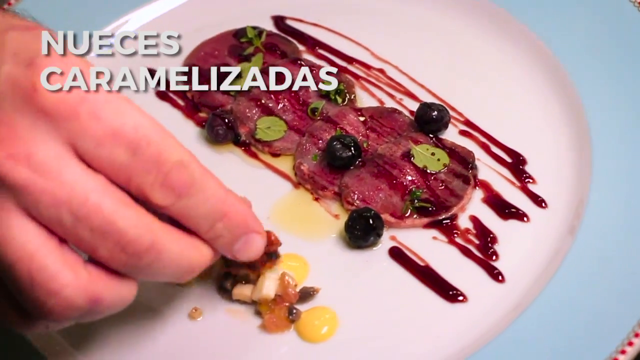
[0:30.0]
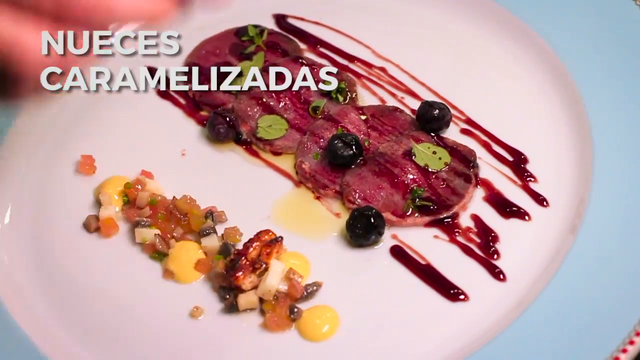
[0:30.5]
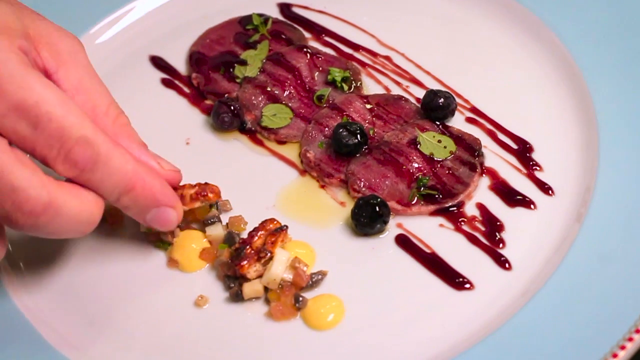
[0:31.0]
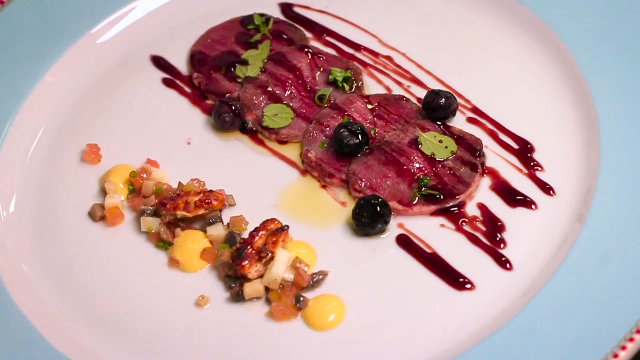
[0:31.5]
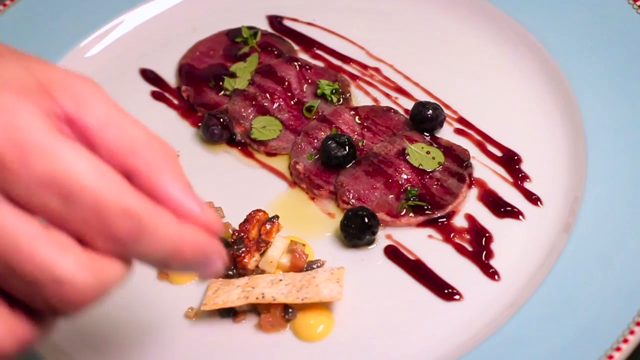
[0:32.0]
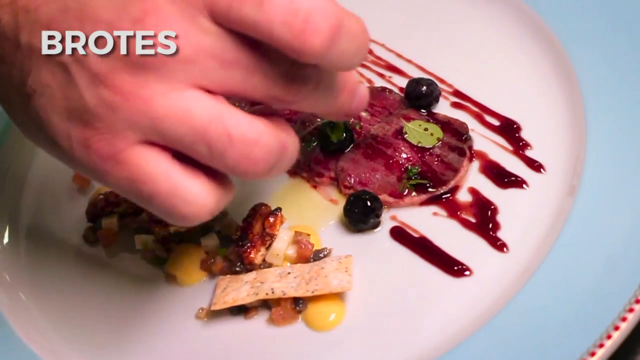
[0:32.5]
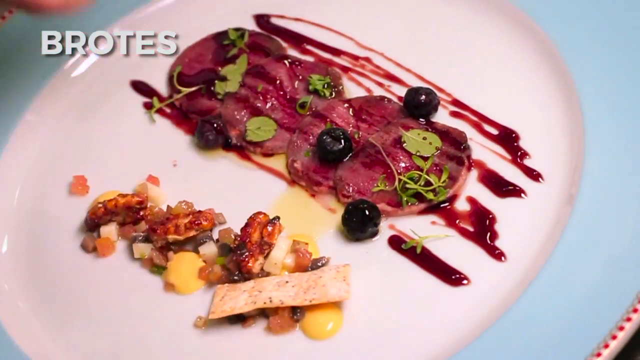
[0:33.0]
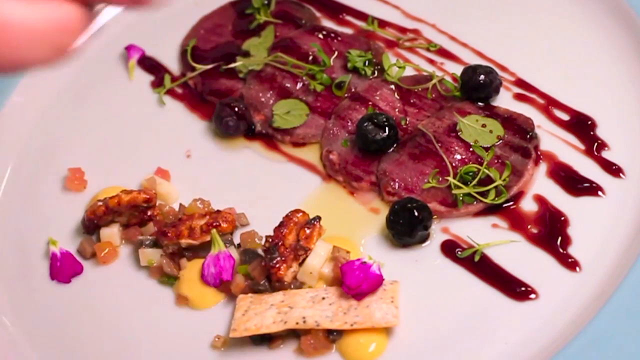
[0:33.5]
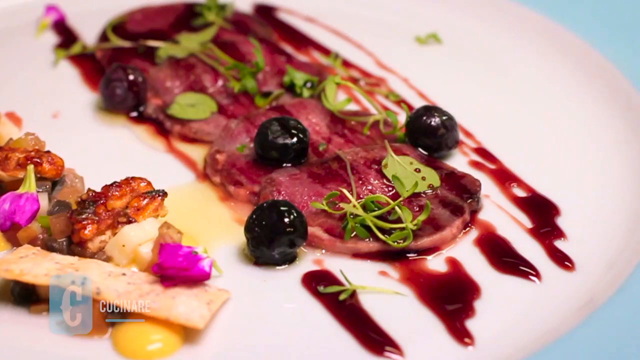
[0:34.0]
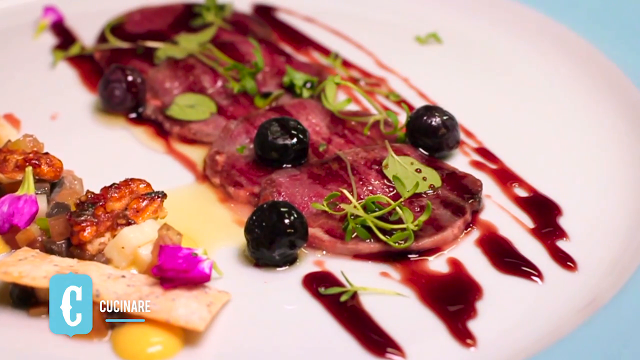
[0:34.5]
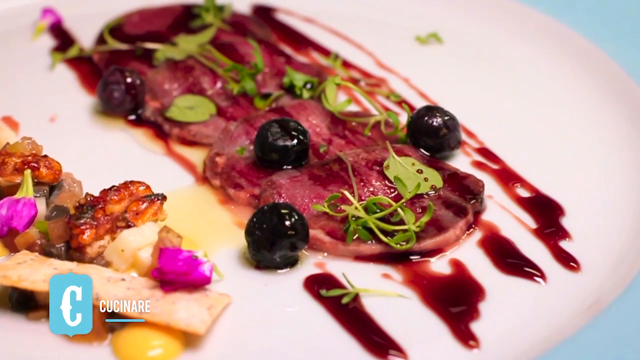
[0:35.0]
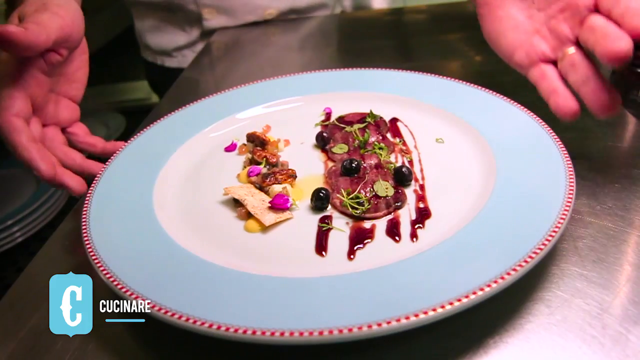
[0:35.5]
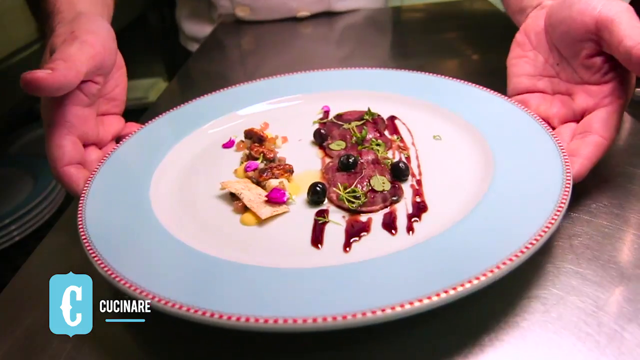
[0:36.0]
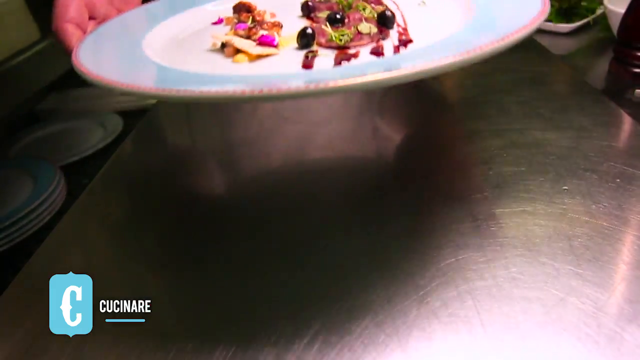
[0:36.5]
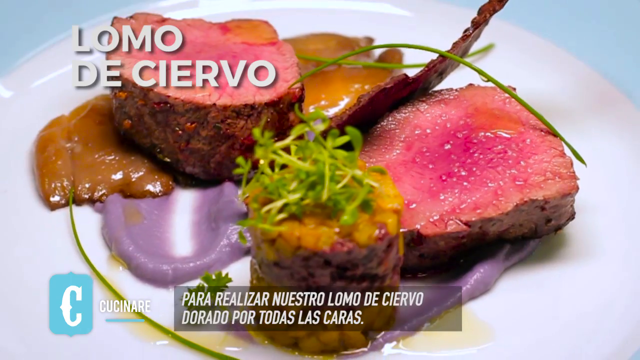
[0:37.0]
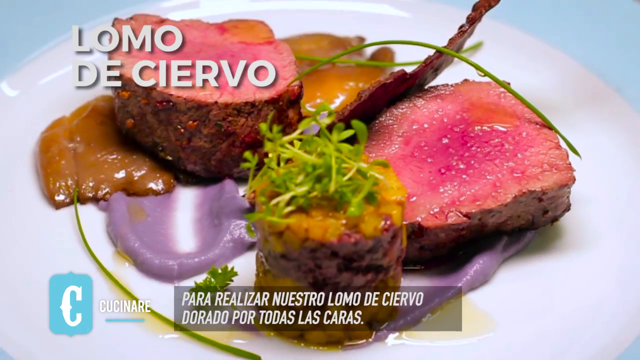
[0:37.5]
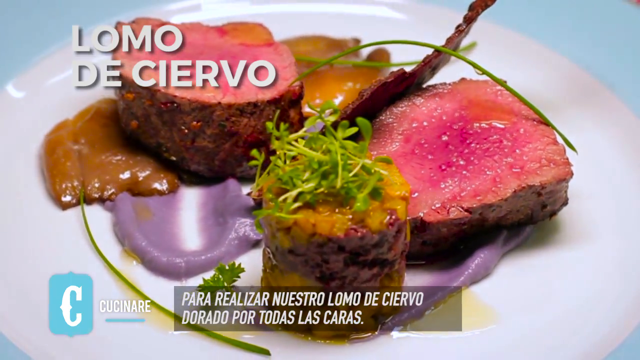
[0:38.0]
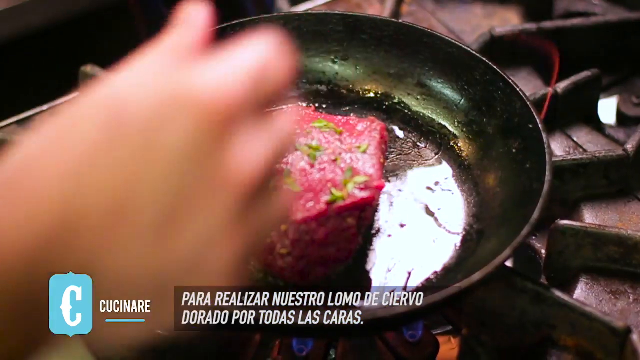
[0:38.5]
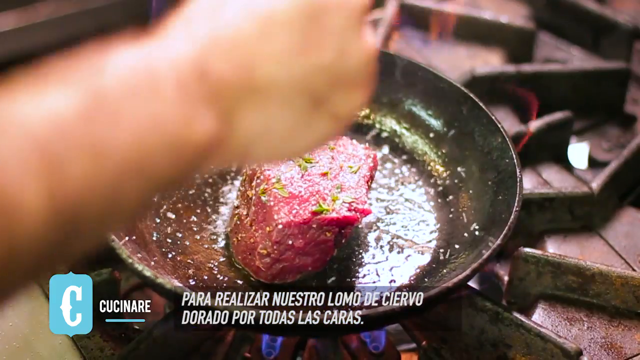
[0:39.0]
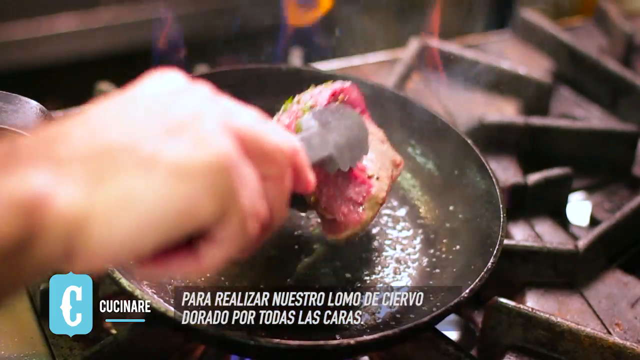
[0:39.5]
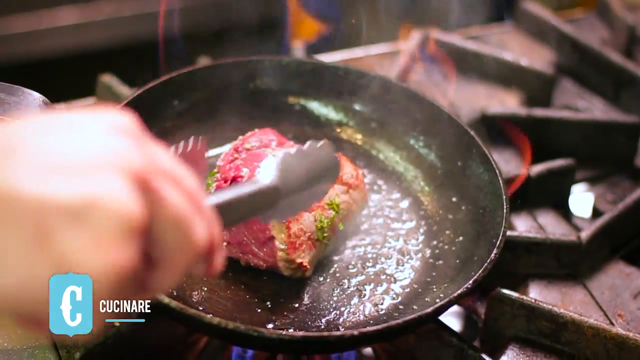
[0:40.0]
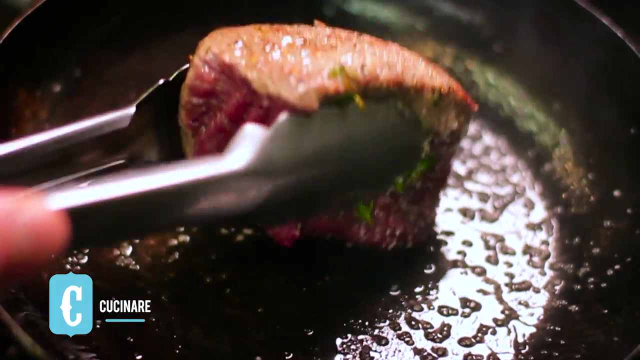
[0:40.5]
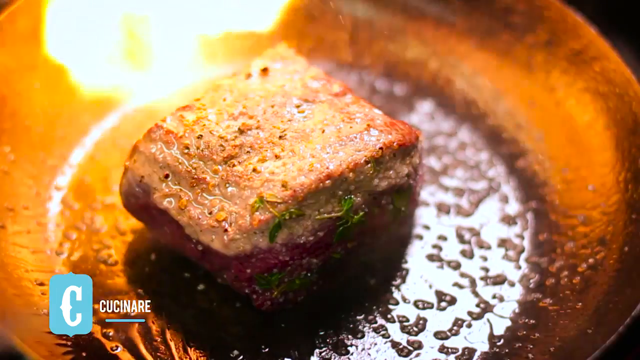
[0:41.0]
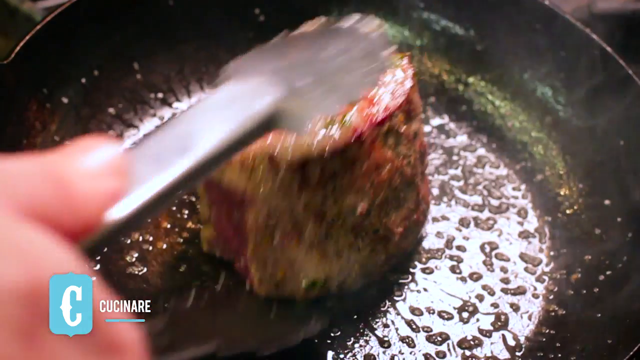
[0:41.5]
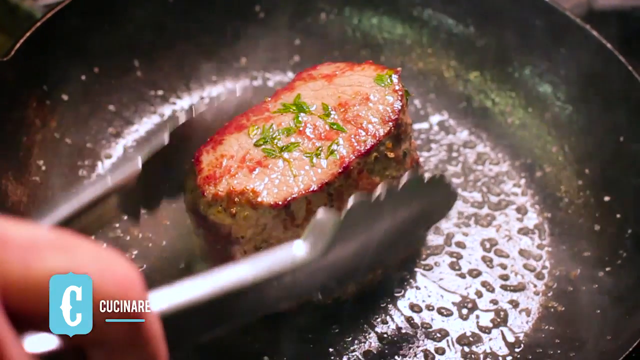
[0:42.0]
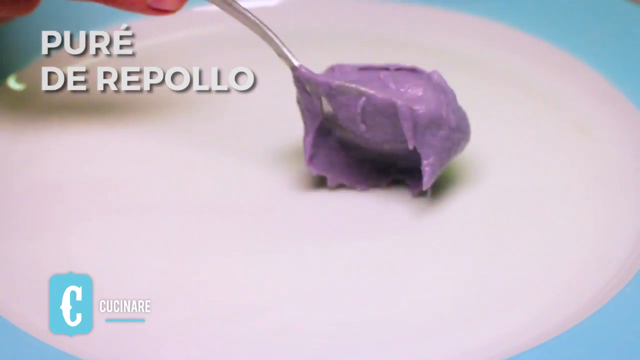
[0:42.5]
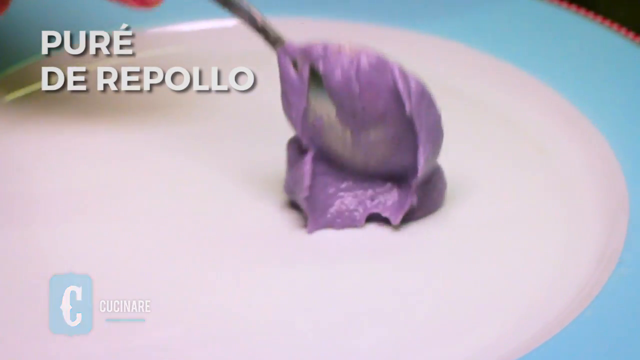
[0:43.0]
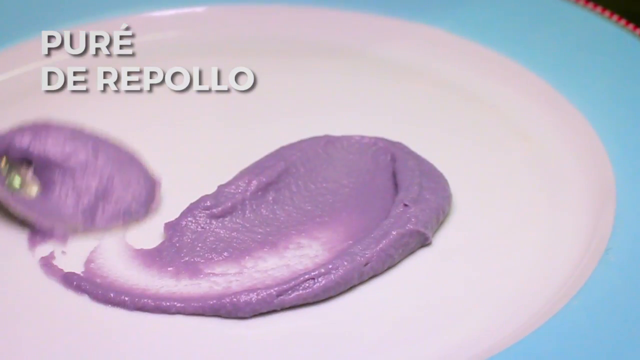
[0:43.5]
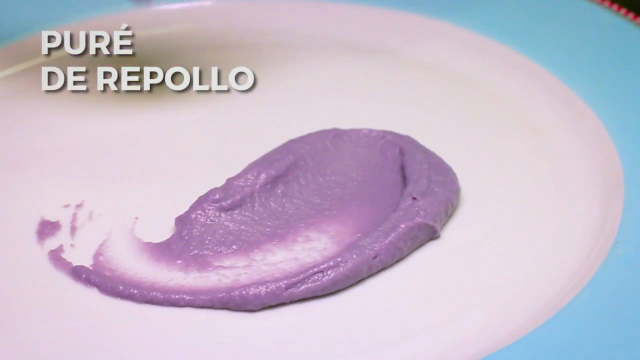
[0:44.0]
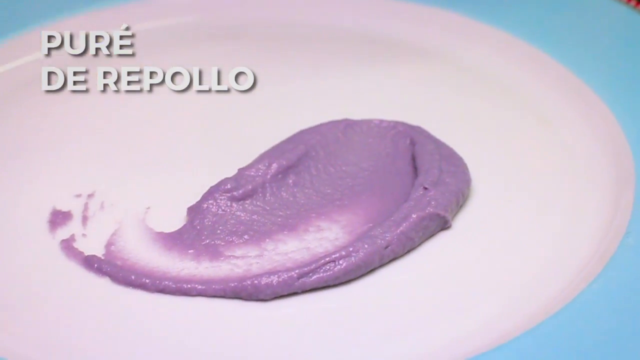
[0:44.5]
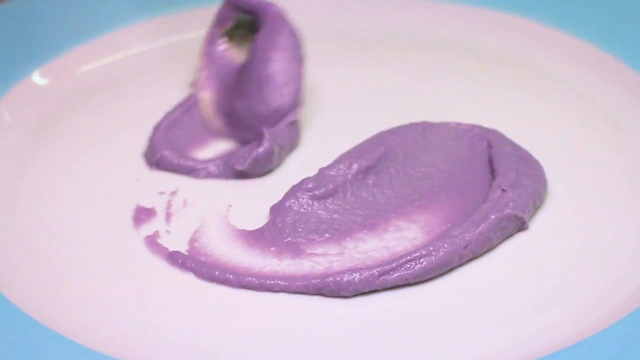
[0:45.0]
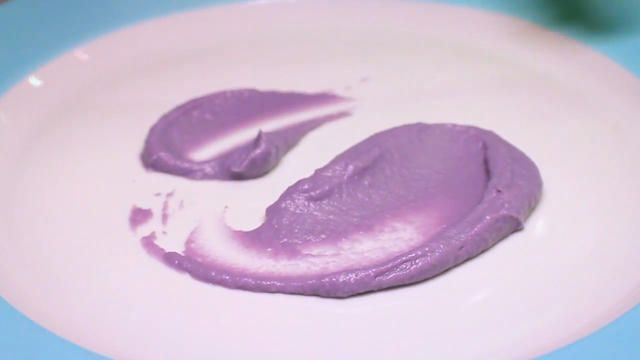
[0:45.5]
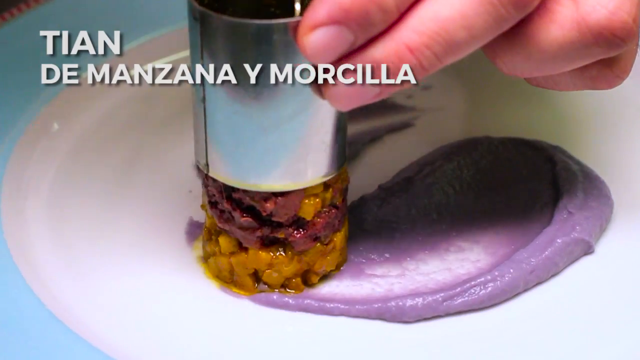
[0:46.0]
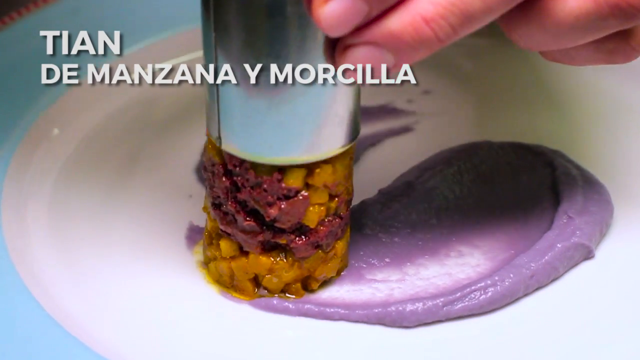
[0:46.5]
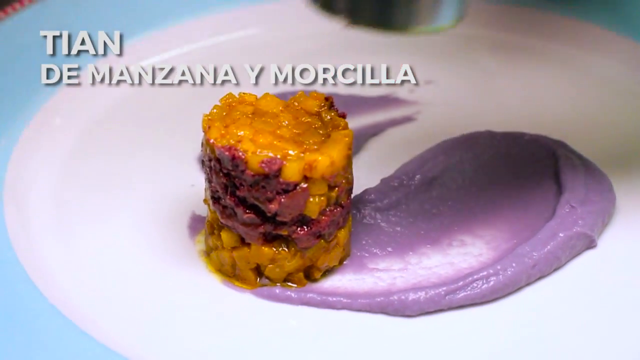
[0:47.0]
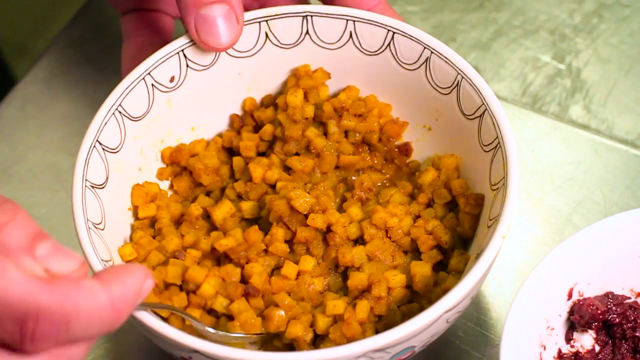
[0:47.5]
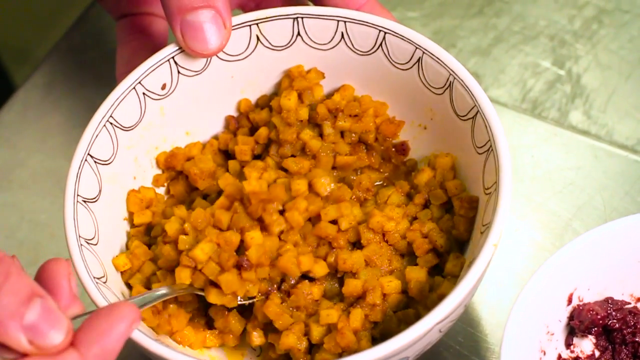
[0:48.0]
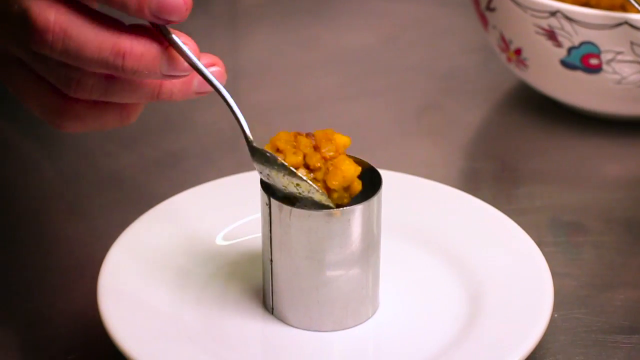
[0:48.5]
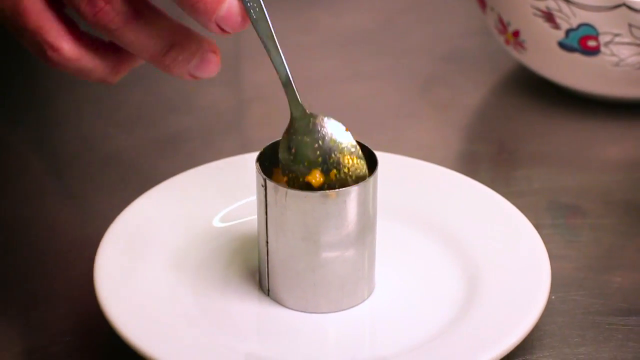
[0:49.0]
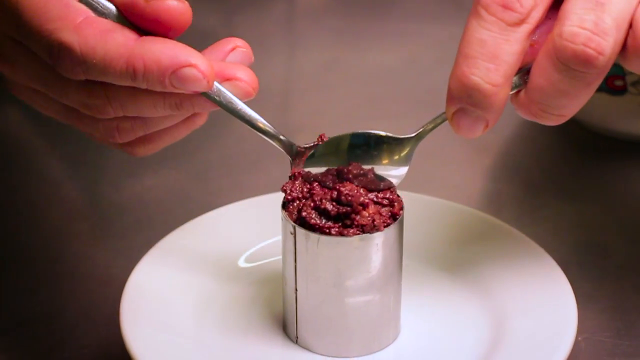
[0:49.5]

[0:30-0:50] The beef carpaccio is plated with another appetizer made of different ingredients next to it. After applying some garnish and finishing the plating, the chef picks up the plate. The next dish is some kind of beef steak: two beef chunks, a purple and orange puree, and a meat tower with garnish on it. The chef shows how it is made: he sears the steak in a frying pan, then makes a purple puree de repollo, and then an apple and blood sausage tian, a layered meat tower, with layers of apple and blood sausage pressed into a mold.